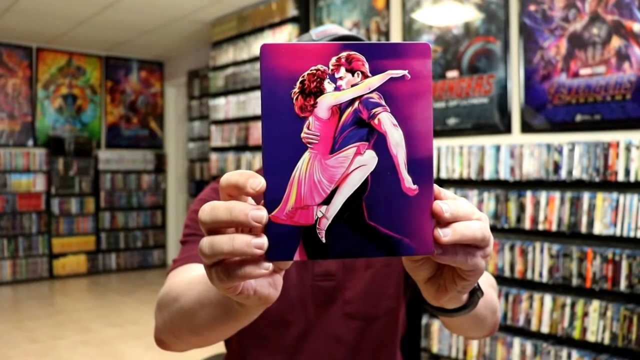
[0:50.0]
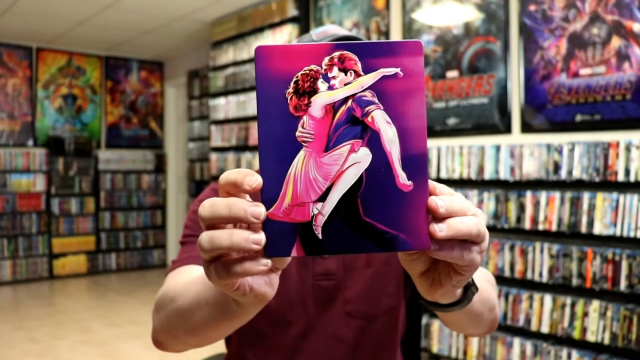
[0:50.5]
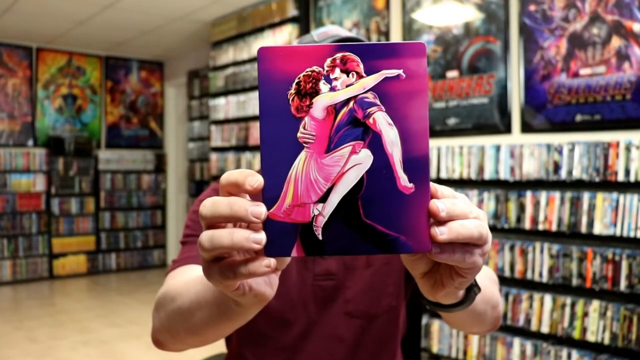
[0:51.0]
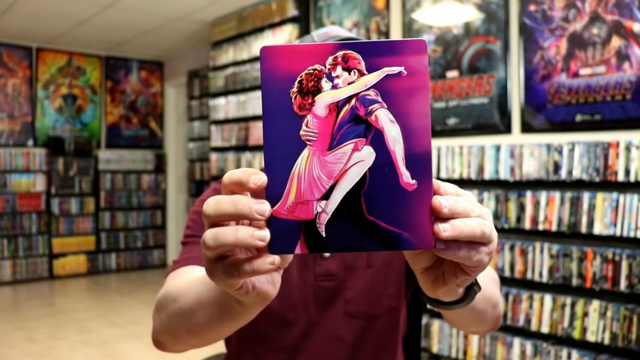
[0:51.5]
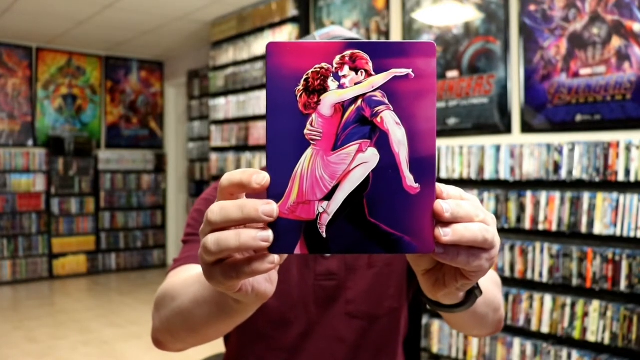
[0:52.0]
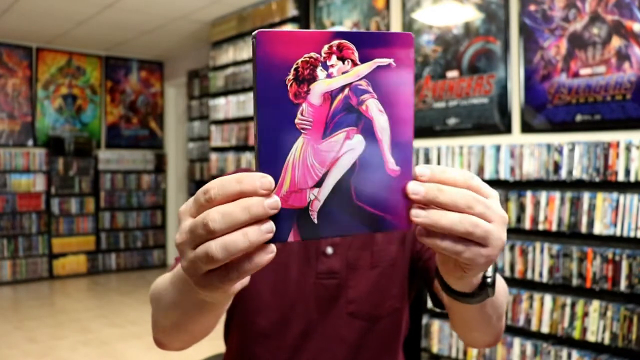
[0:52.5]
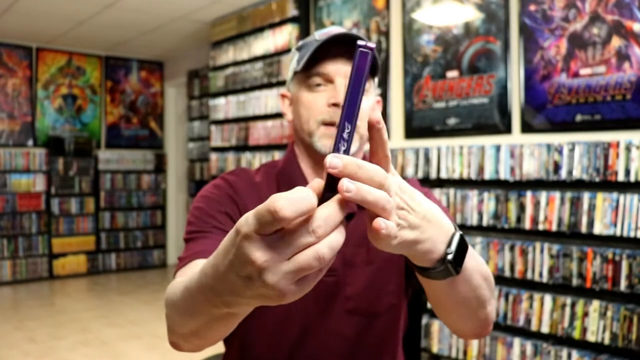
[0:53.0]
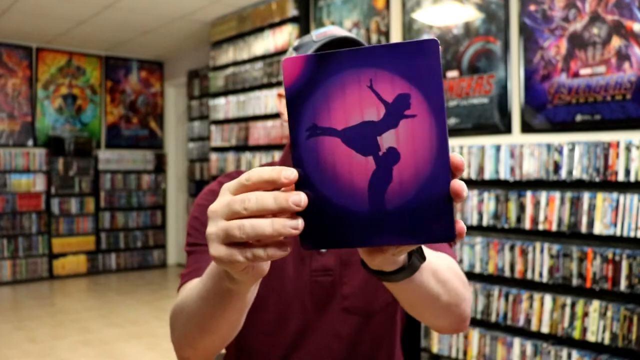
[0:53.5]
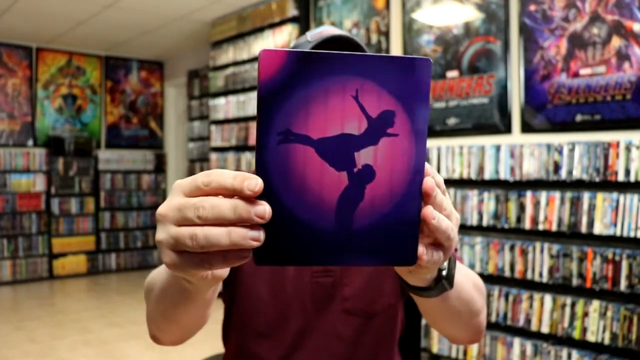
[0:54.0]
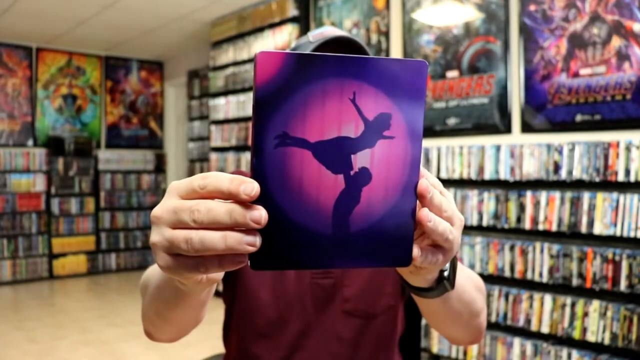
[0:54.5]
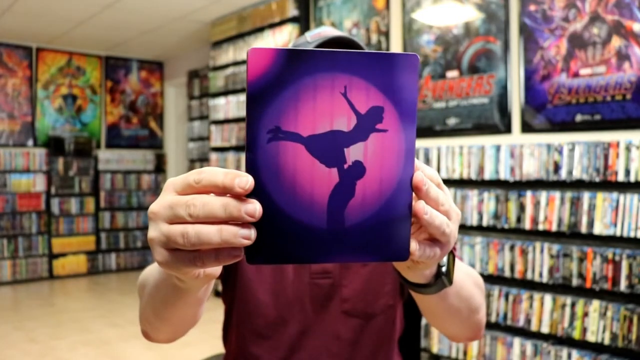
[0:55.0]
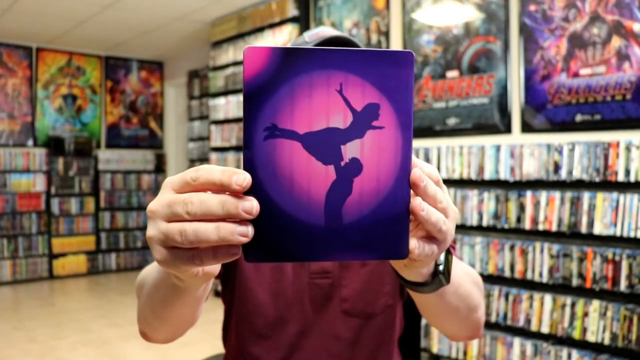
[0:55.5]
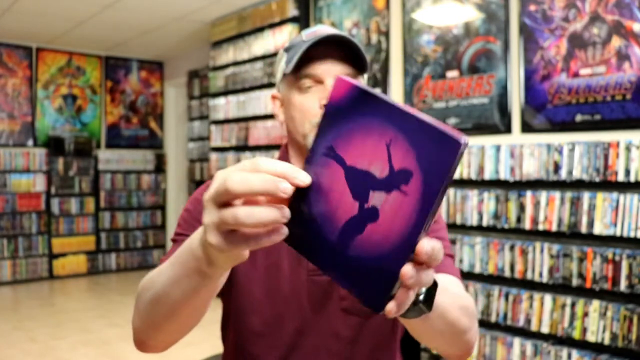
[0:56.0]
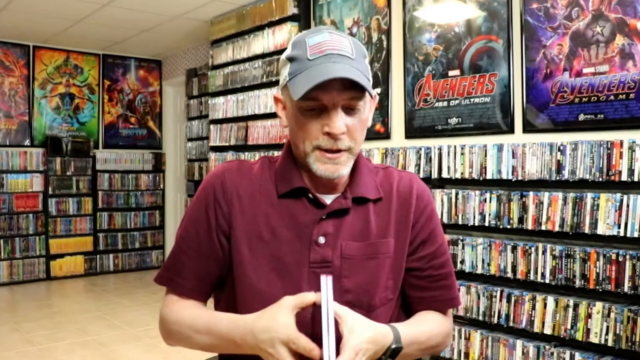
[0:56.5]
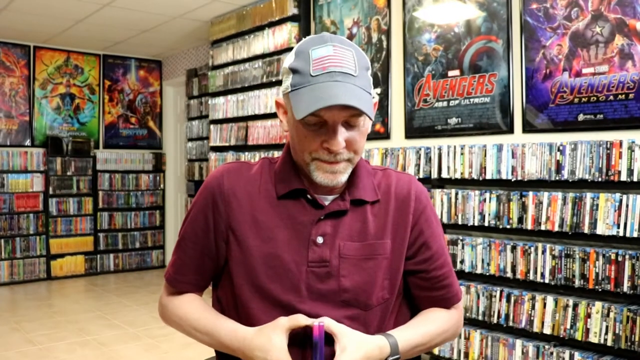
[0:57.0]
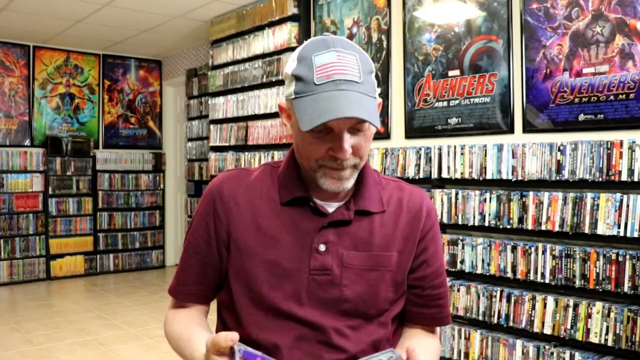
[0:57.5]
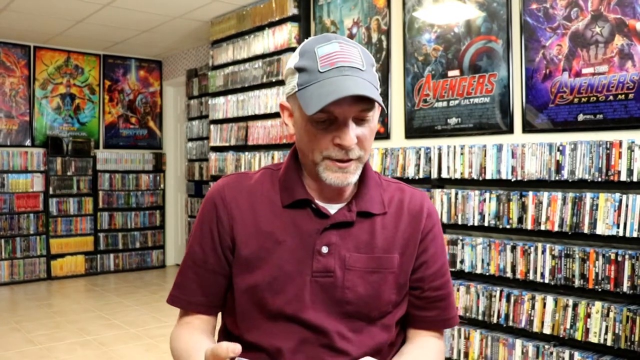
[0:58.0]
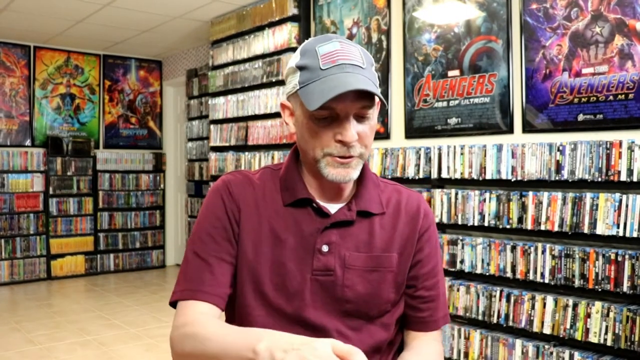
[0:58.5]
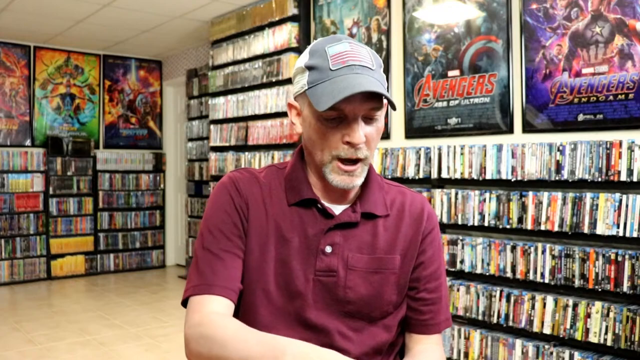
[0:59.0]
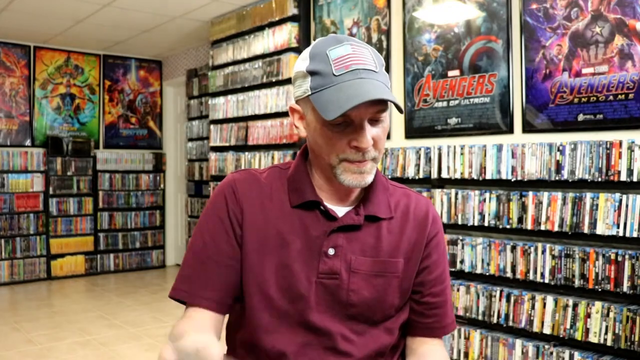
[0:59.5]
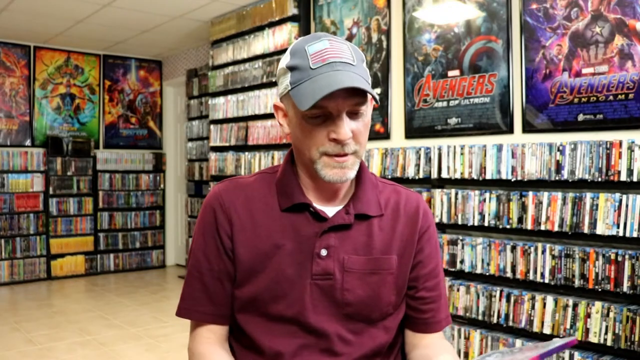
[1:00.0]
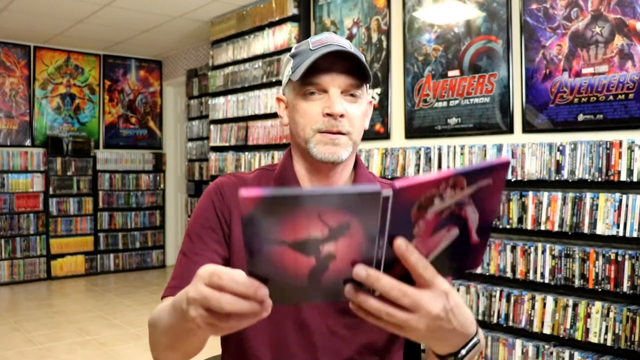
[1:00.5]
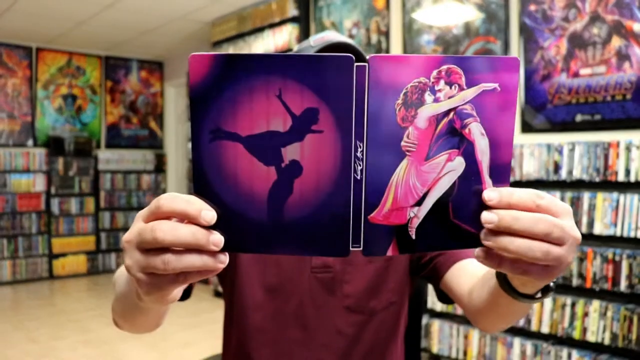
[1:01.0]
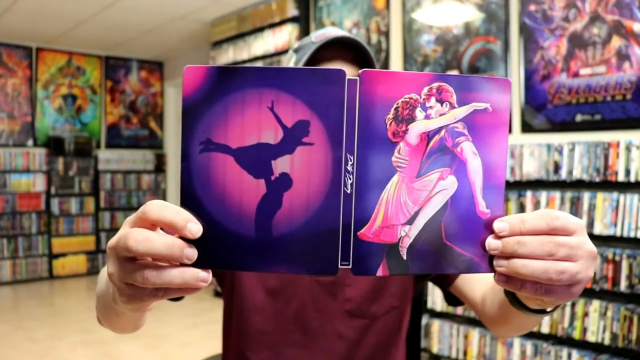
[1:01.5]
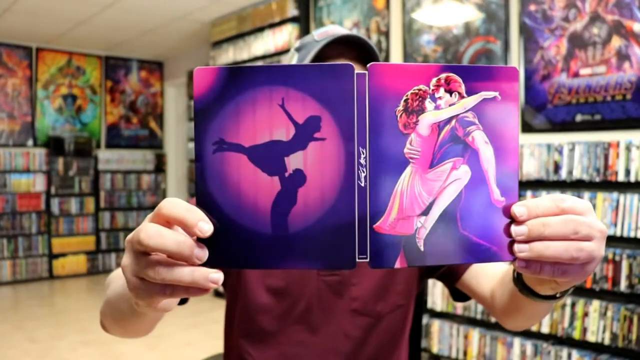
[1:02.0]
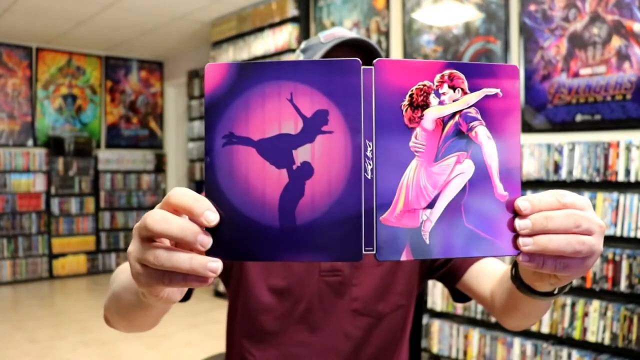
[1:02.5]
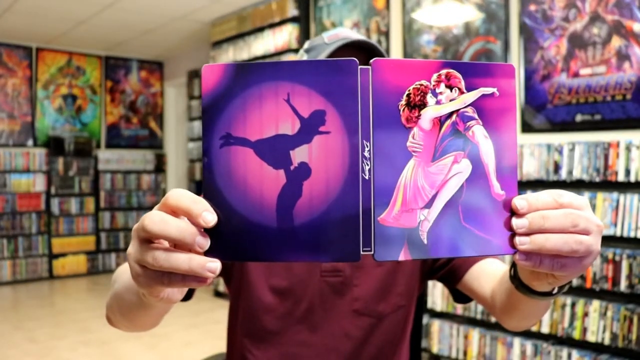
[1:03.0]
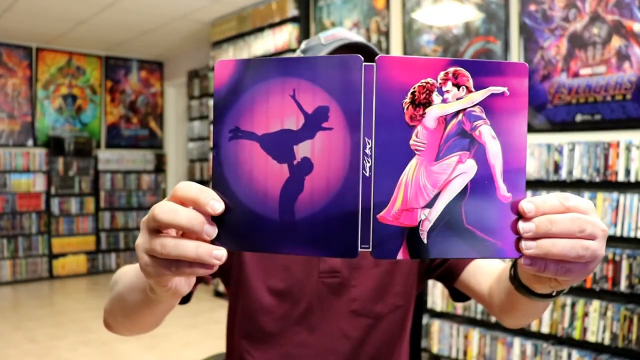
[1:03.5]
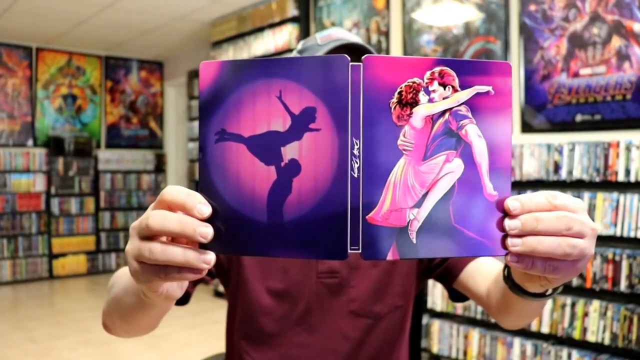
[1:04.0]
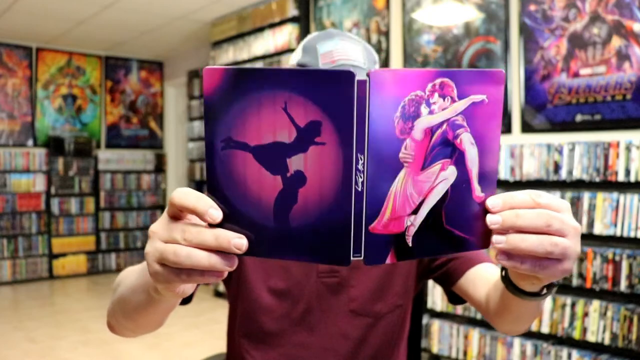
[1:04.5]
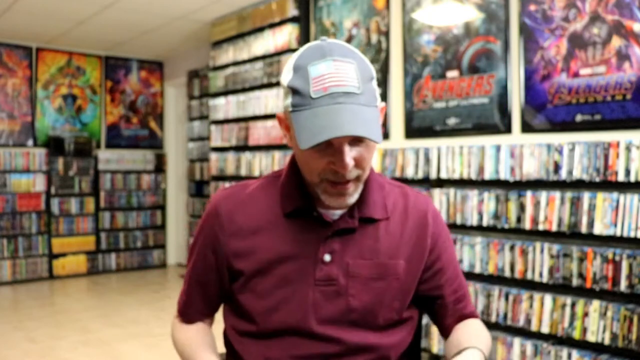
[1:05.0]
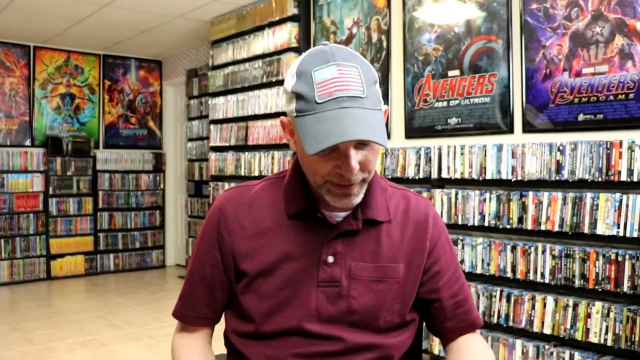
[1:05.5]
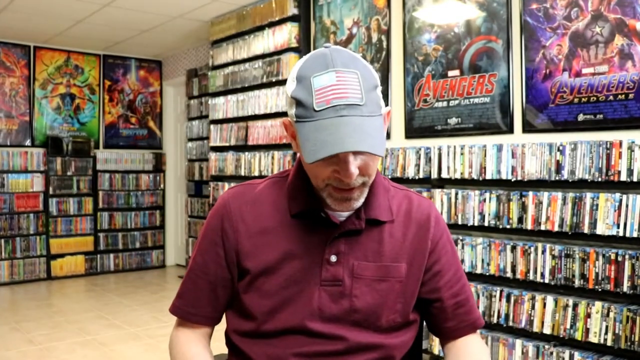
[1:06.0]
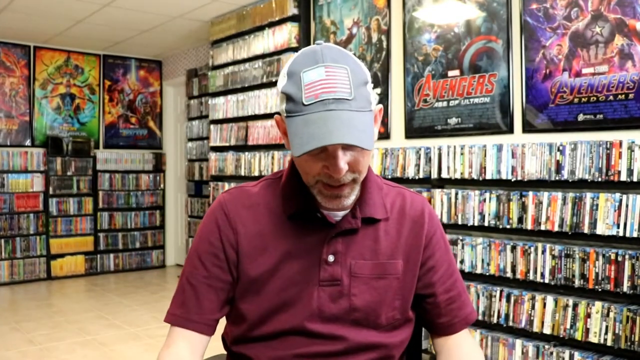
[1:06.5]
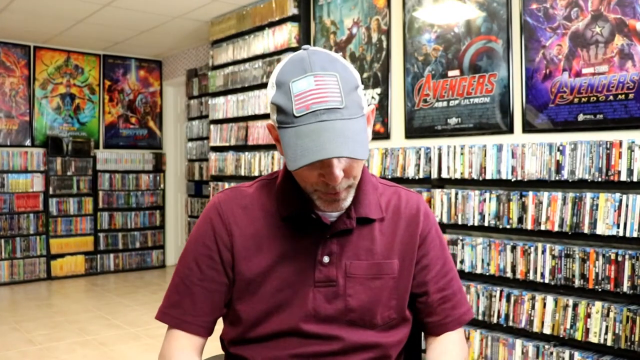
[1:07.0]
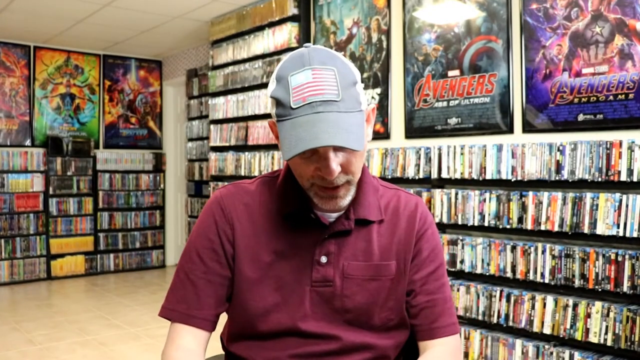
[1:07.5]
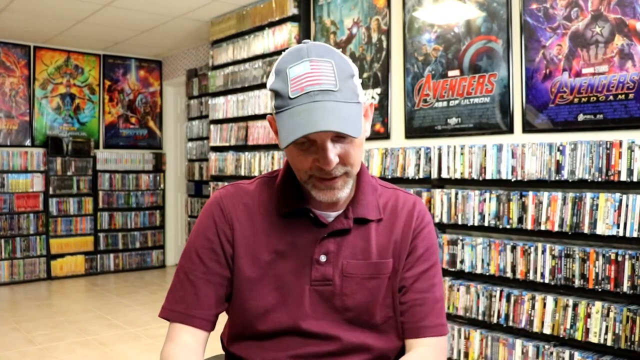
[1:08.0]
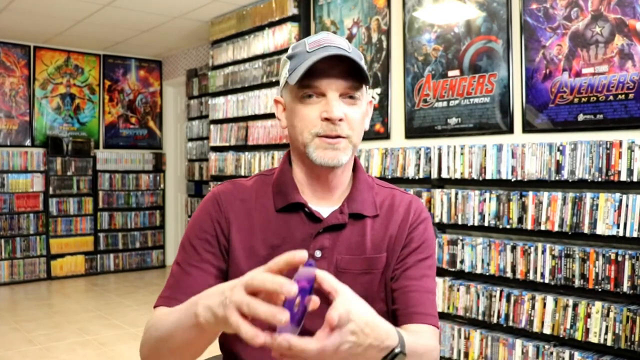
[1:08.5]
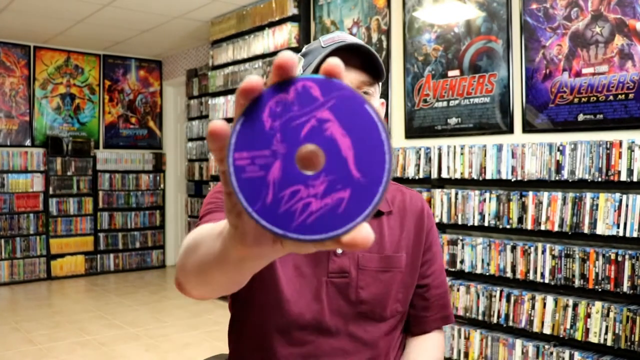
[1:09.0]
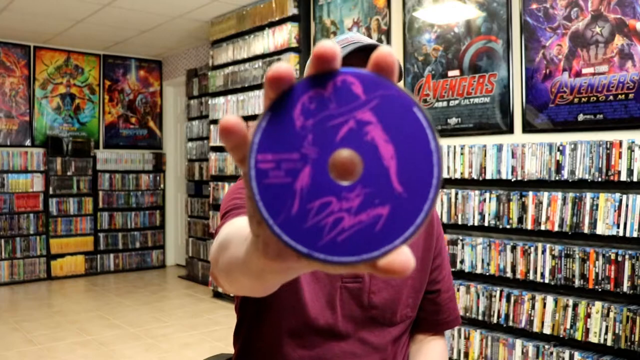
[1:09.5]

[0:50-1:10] The man continues holding the cover box for the film, turns it around and shows an additional cover. He opens a special-looking case that looks almost like a steel case, its design more like hard metal than plastic. He takes out the disc and holds it up to the camera, showing a stylized image of the film's two main characters, the male and the female, shaded in what appears to be a purple haze color scheme, in a stylized 80s-style look. The shot ends with him briefly showing the disc to the camera.